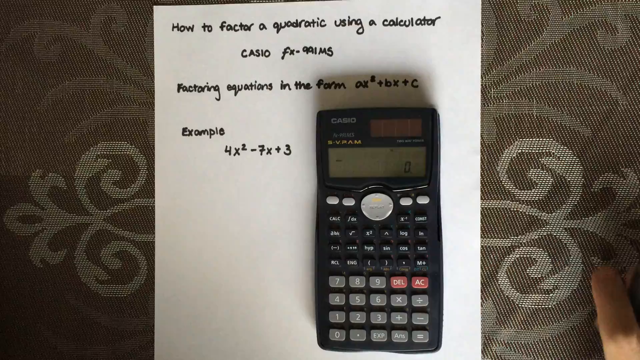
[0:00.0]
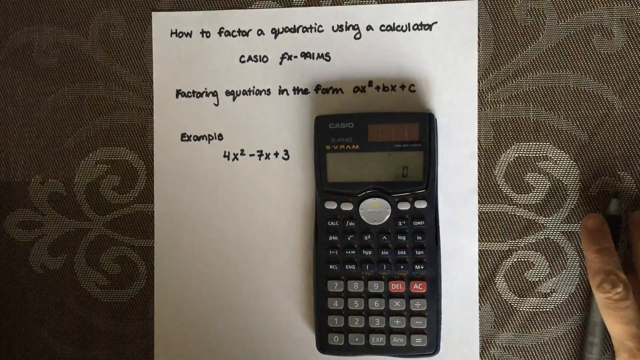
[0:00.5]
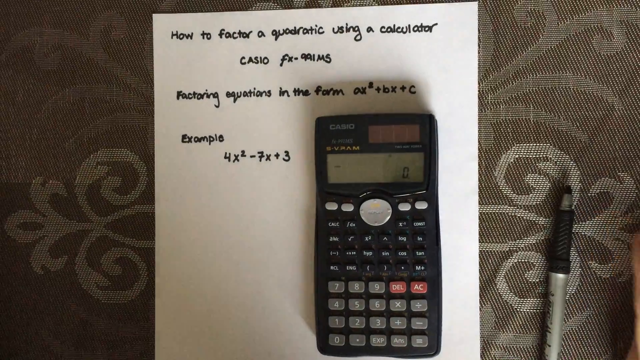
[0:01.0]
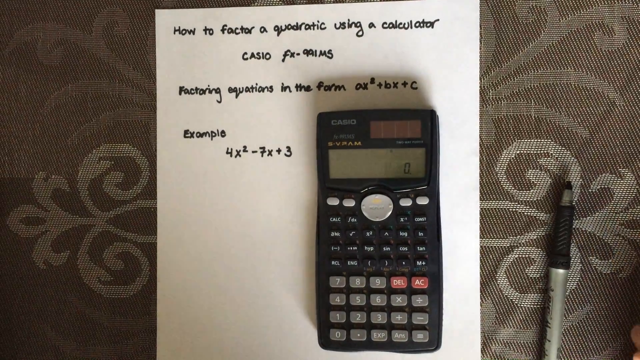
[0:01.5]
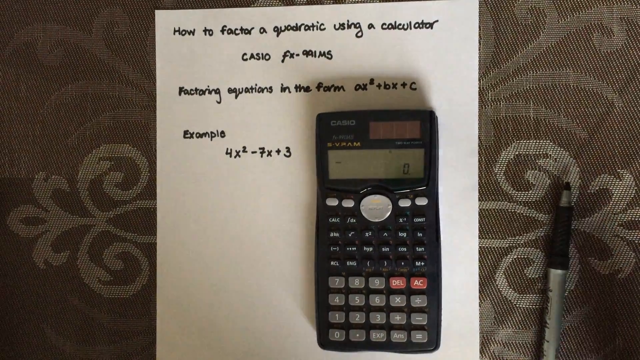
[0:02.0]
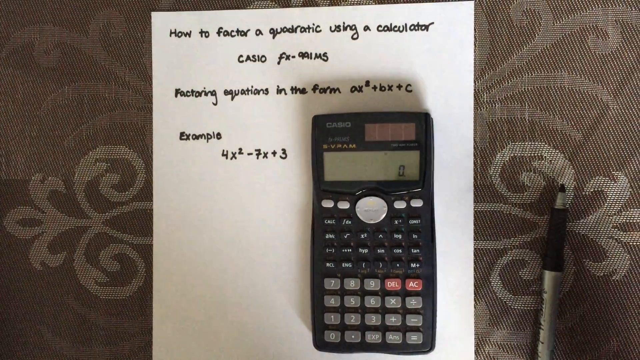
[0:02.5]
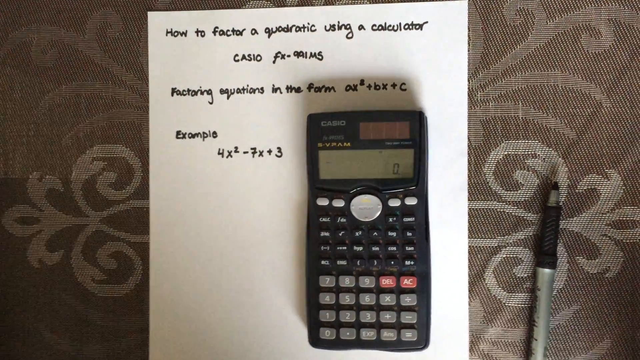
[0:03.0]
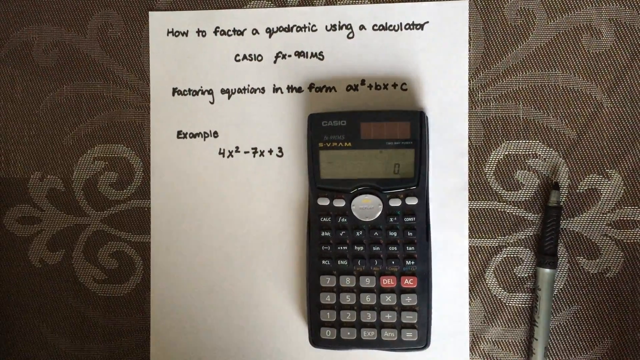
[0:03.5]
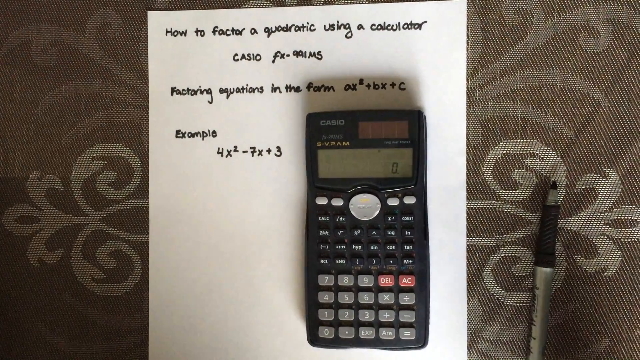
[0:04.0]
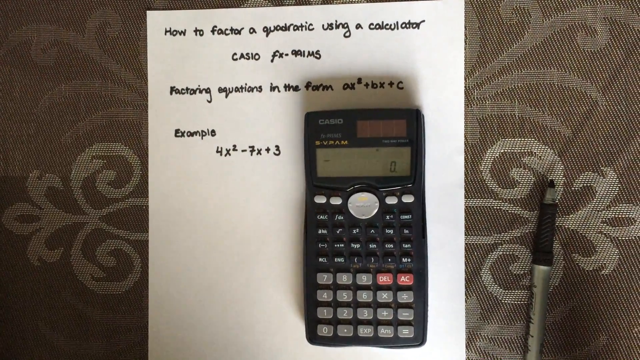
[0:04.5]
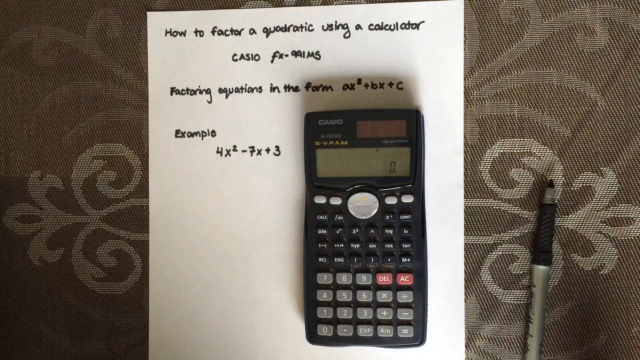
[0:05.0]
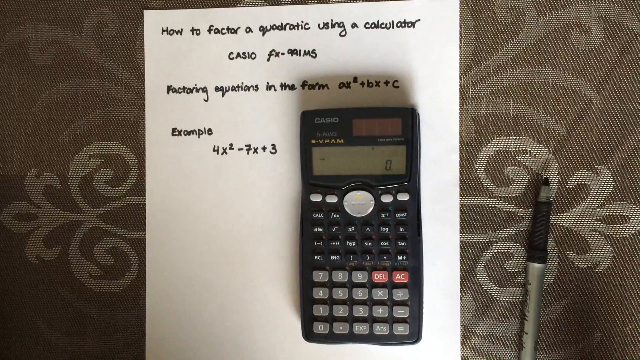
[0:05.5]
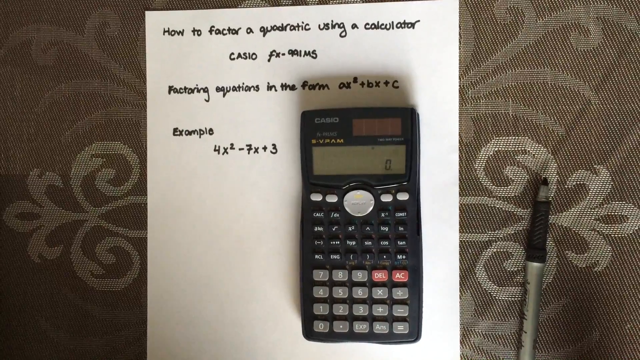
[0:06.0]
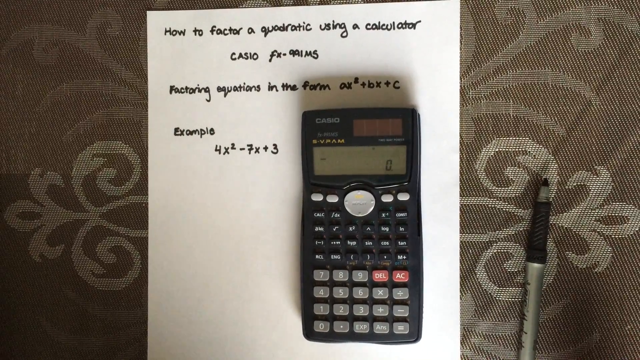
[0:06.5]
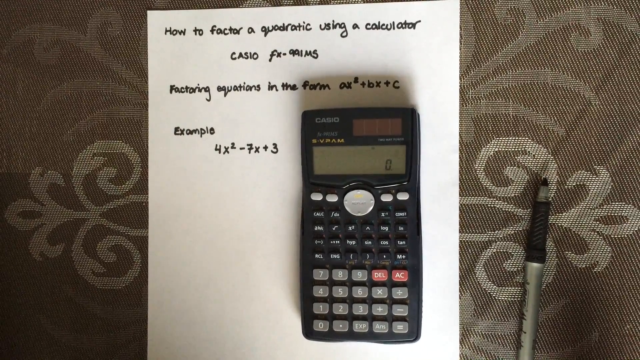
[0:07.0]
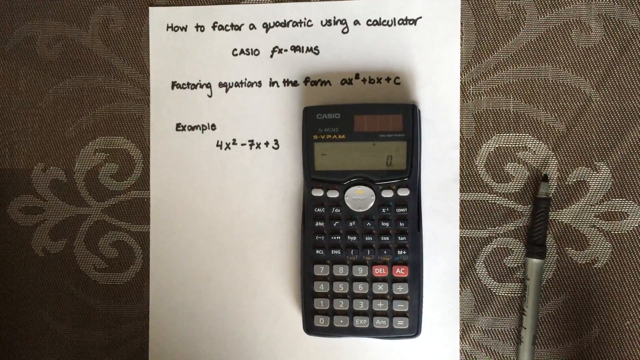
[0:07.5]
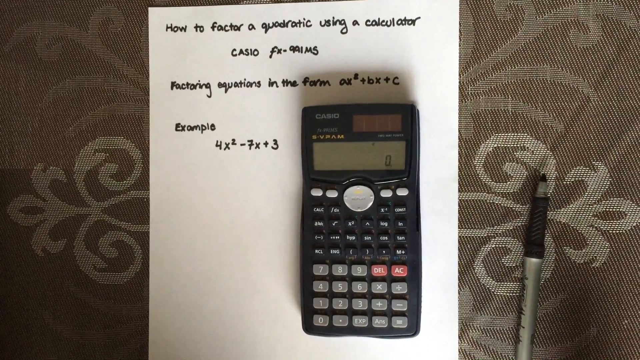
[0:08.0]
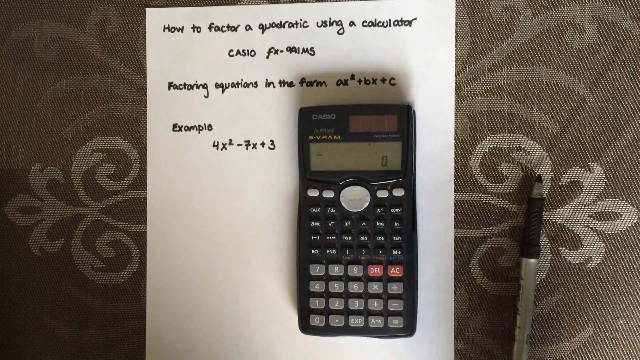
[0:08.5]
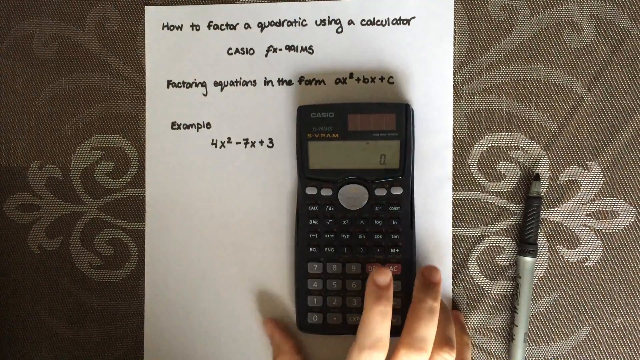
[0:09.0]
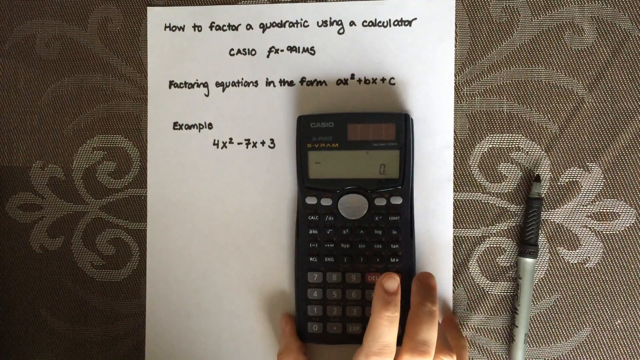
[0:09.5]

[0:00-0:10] A calculator is shown on the screen with a white paper right behind it. A hand appears to be typing some number on the calculator. On the paper in the background it says "how to factor a quadratic using a calculator" and "Casio FX-991-MS", along with the example 4x squared minus 7x plus 3. Some sort of design is visible in the background, with the papers lying on it.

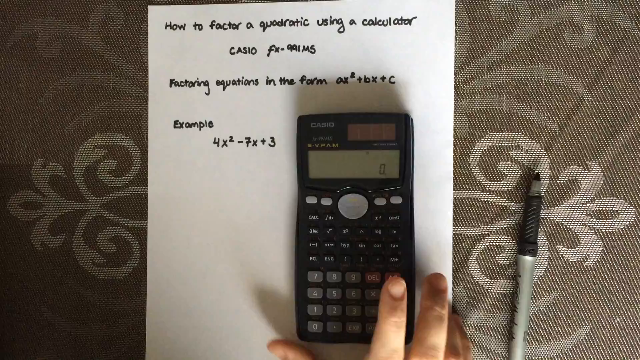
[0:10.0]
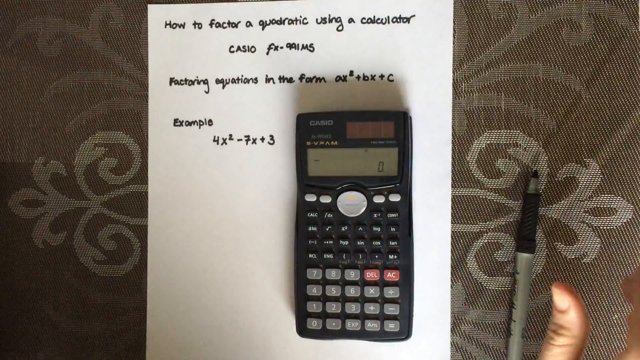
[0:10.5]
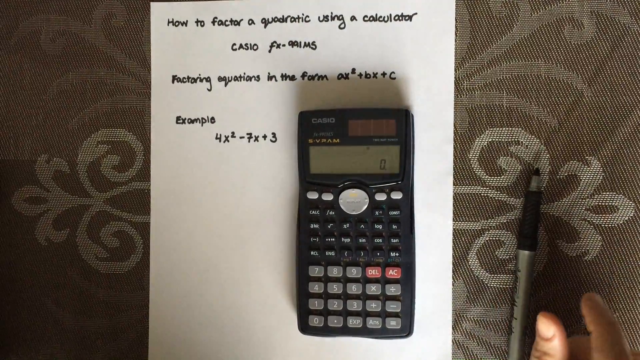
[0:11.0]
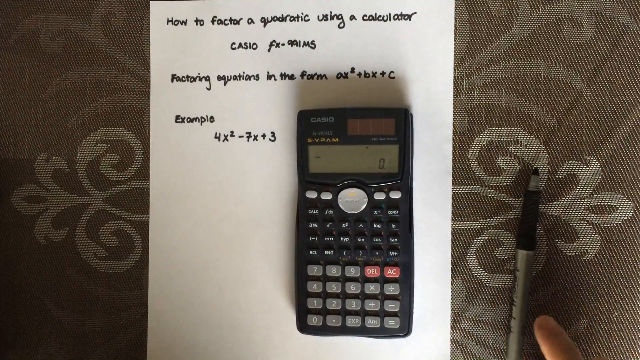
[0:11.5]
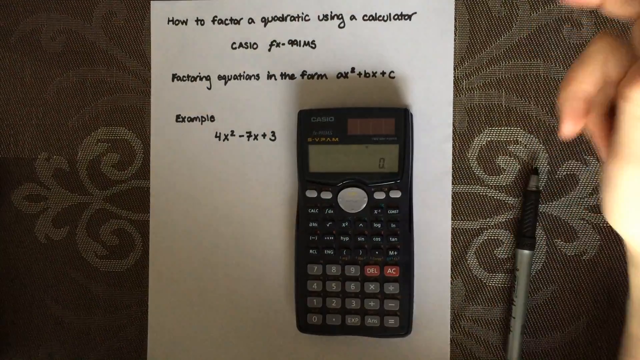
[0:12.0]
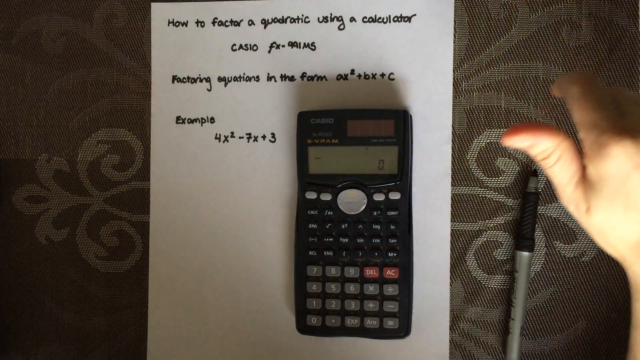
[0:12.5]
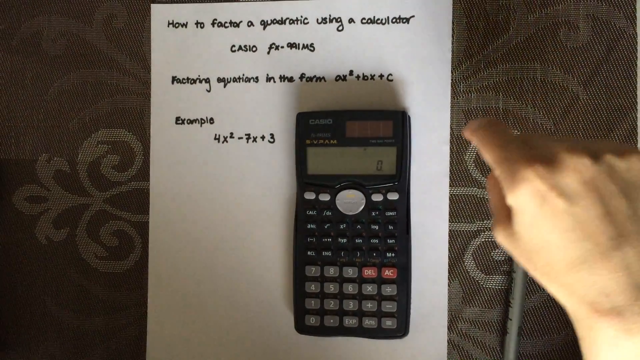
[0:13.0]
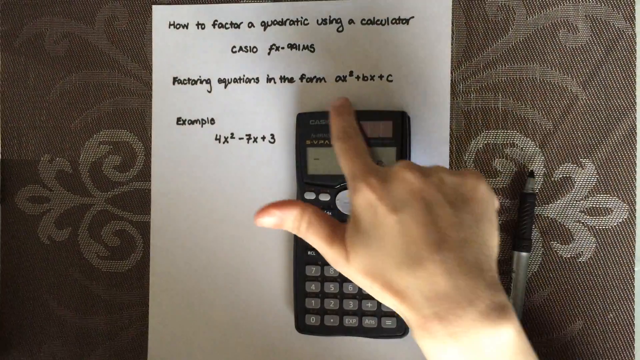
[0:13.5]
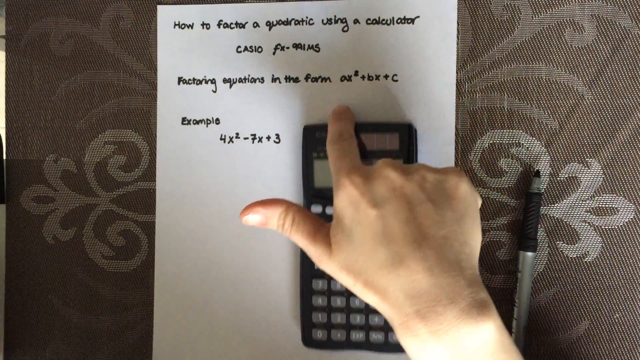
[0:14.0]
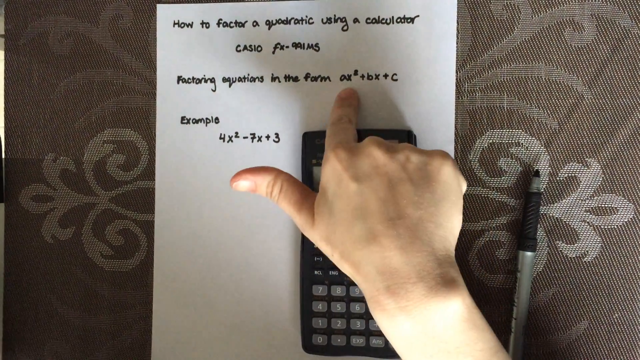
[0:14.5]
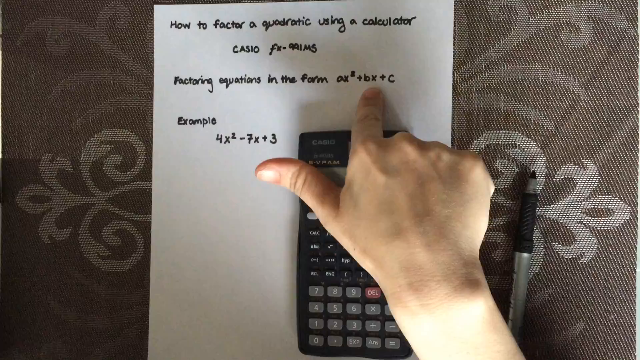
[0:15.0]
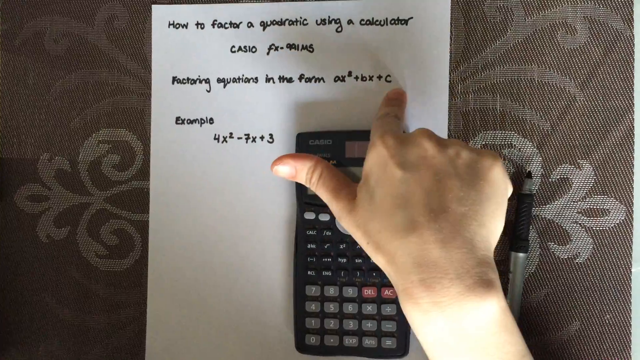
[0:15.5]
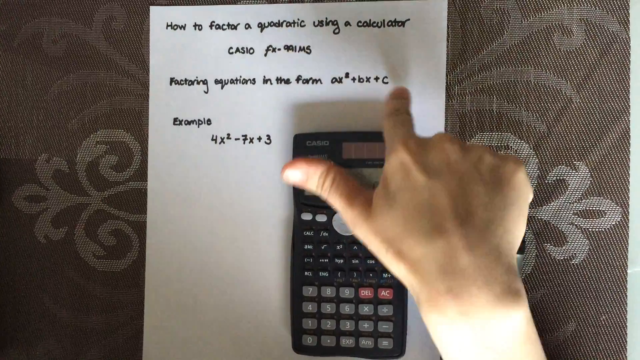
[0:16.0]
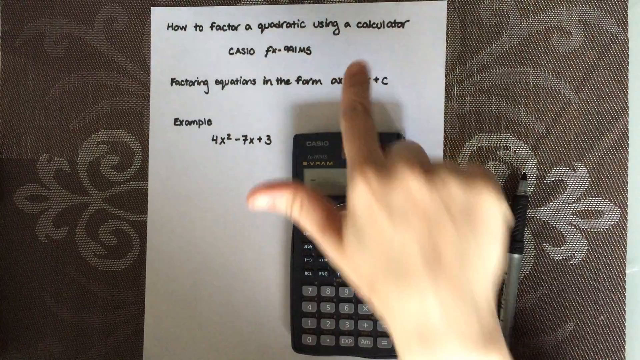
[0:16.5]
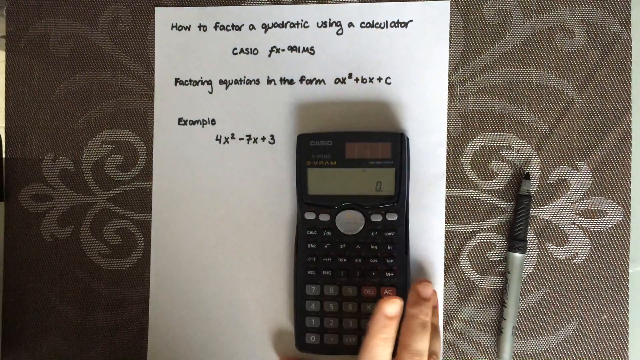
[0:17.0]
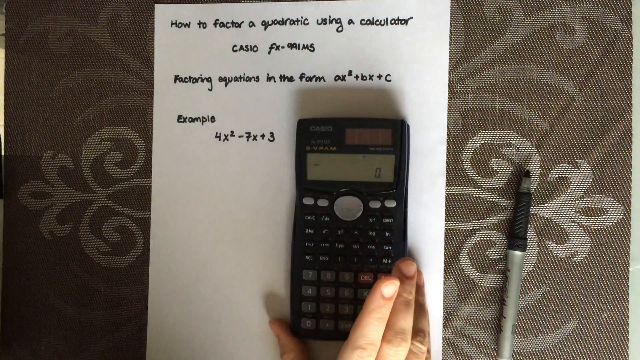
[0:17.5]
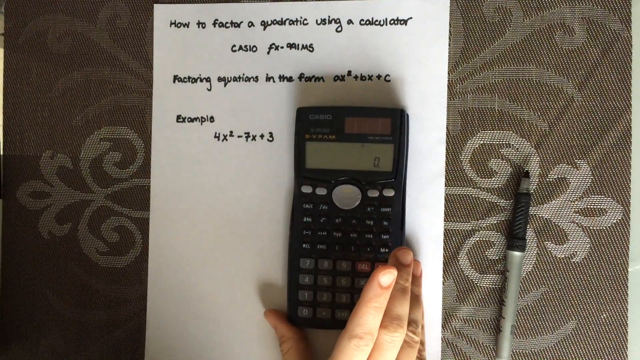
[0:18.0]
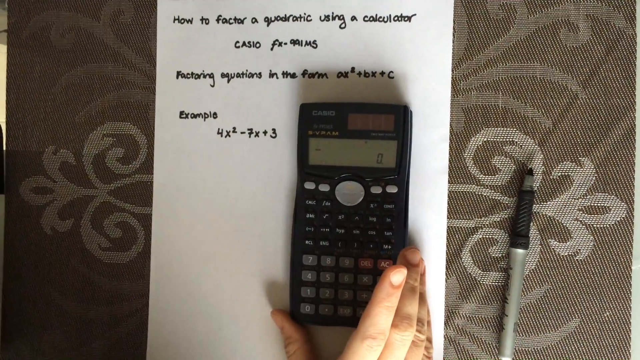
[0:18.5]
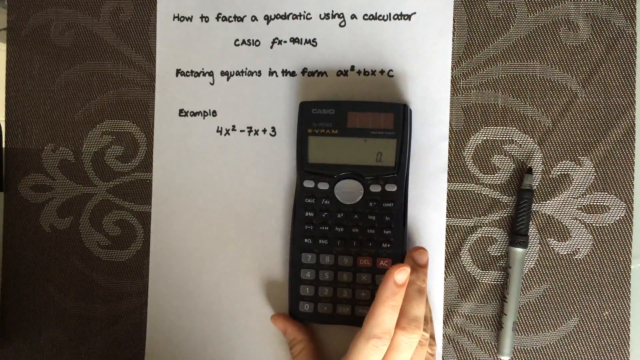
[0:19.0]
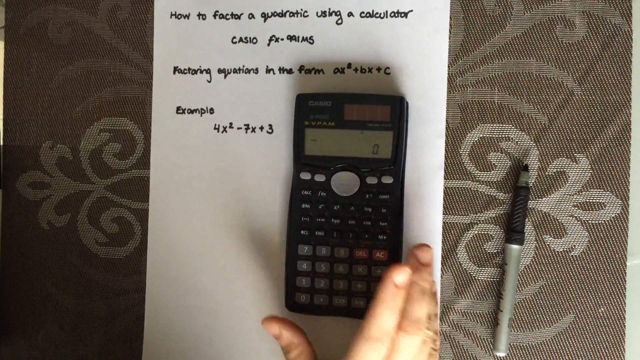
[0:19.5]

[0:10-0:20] The calculator is on top of a paper that gives instructions for factoring with a calculator and an example, 4x squared minus 7x plus 3. A hand appears to be typing some number on the calculator. On the right-hand side there appears to be a sofa with a symmetric design.